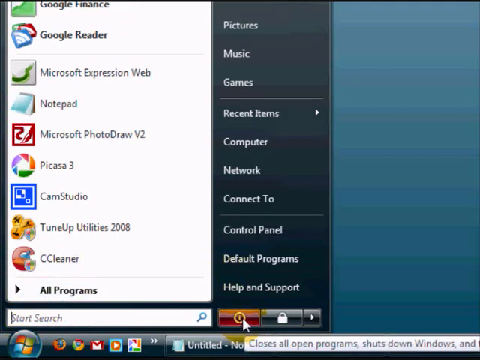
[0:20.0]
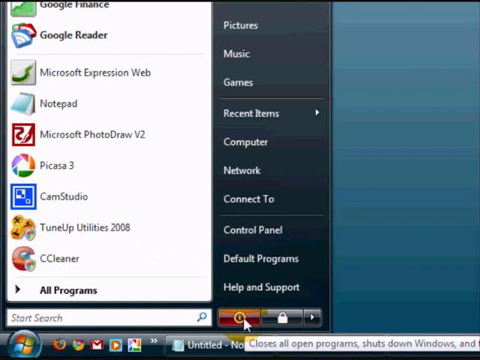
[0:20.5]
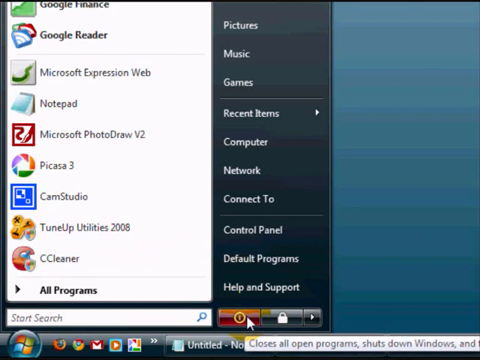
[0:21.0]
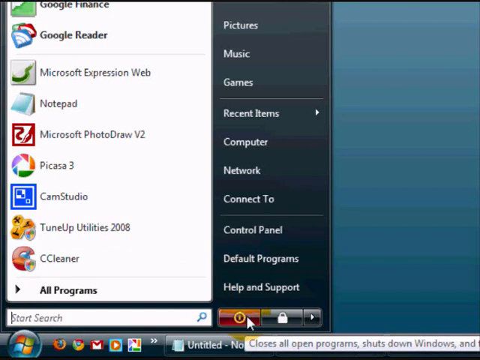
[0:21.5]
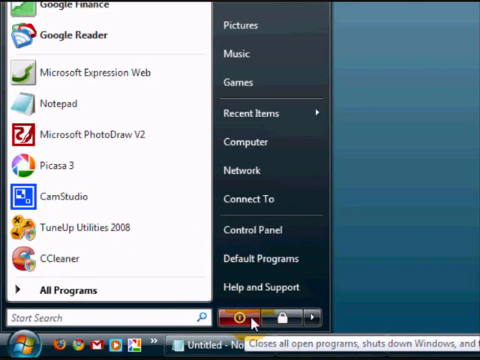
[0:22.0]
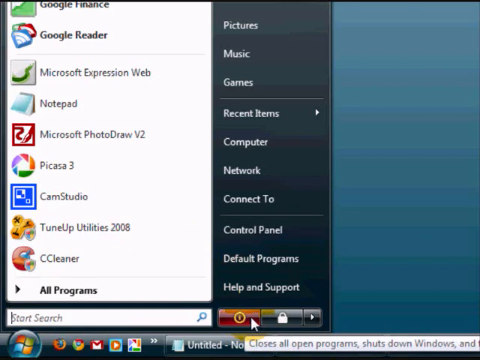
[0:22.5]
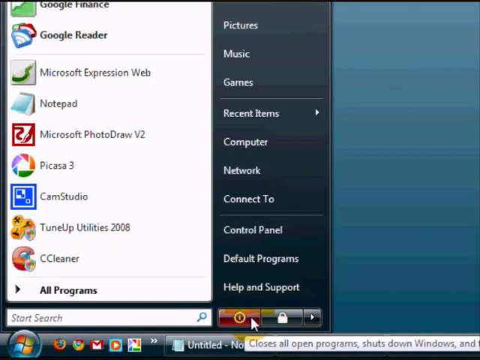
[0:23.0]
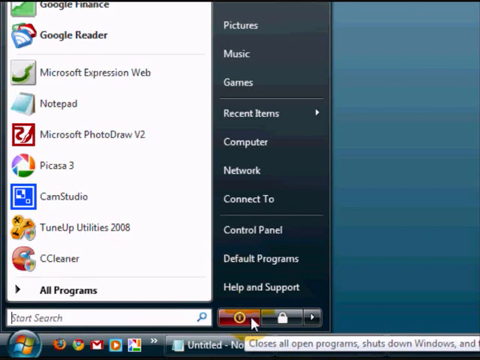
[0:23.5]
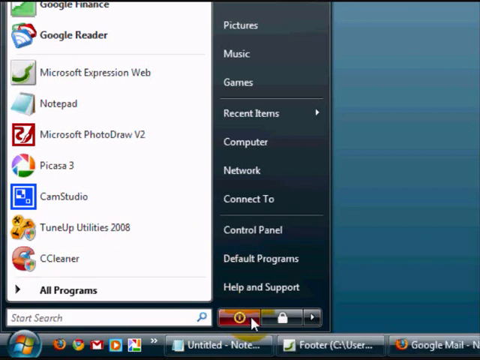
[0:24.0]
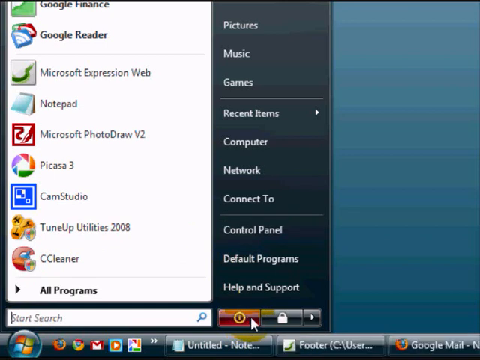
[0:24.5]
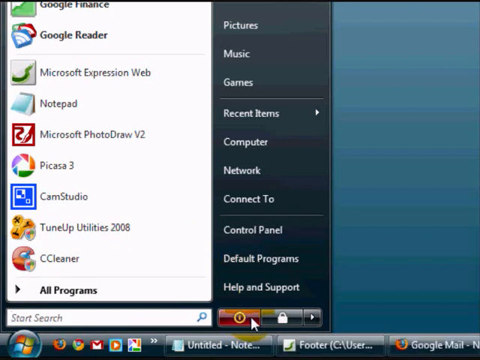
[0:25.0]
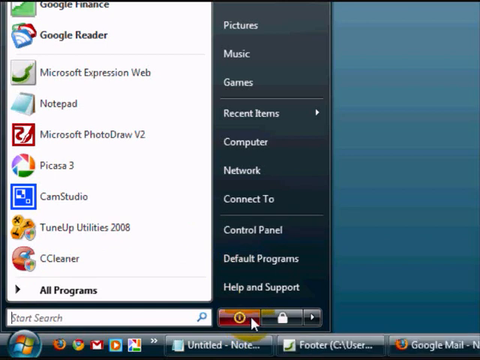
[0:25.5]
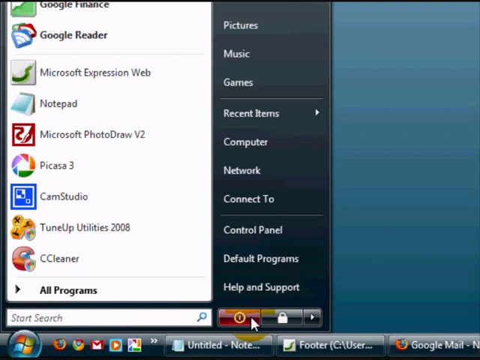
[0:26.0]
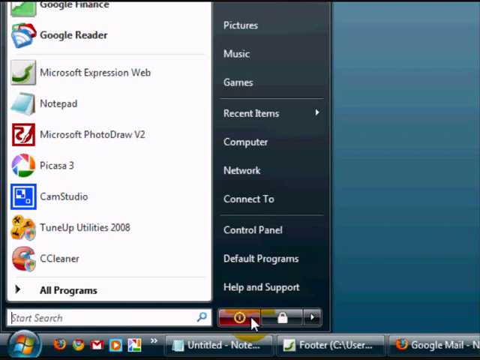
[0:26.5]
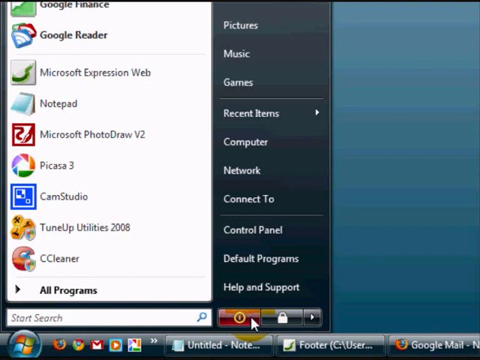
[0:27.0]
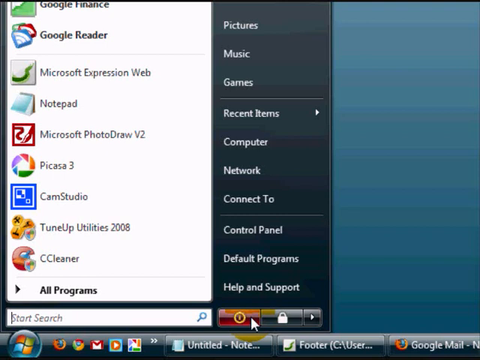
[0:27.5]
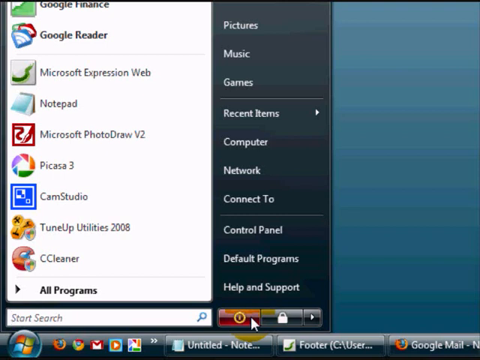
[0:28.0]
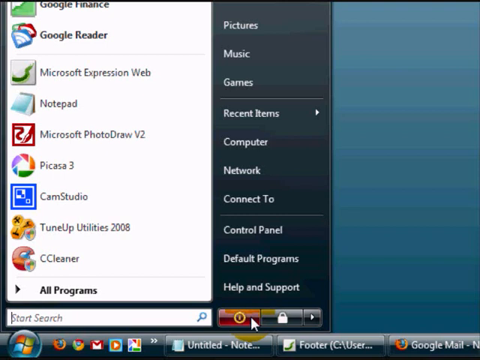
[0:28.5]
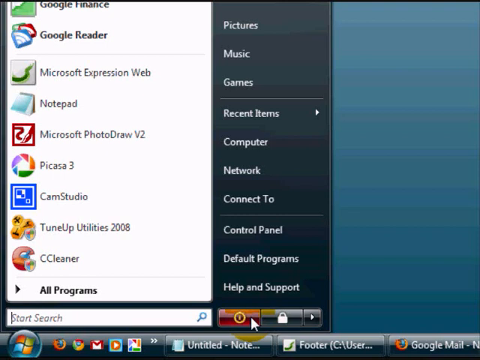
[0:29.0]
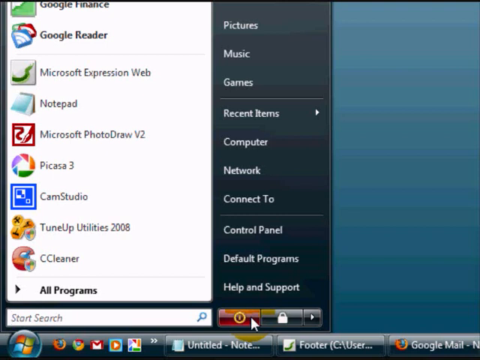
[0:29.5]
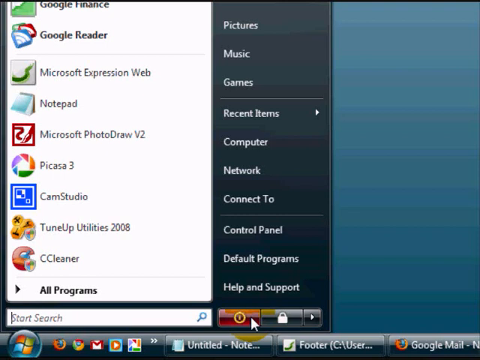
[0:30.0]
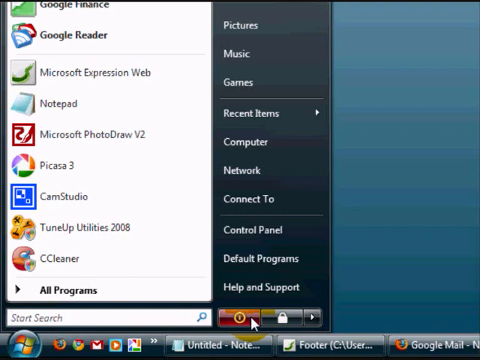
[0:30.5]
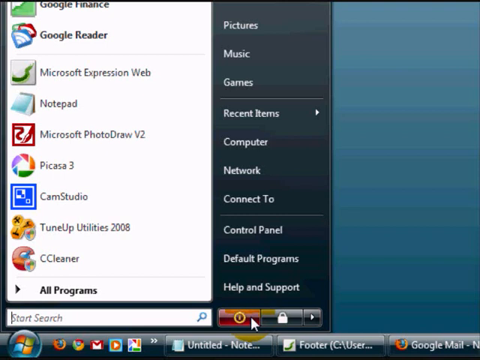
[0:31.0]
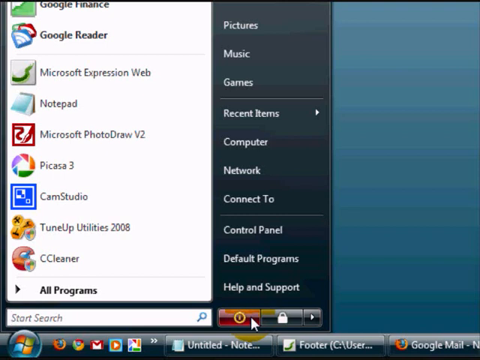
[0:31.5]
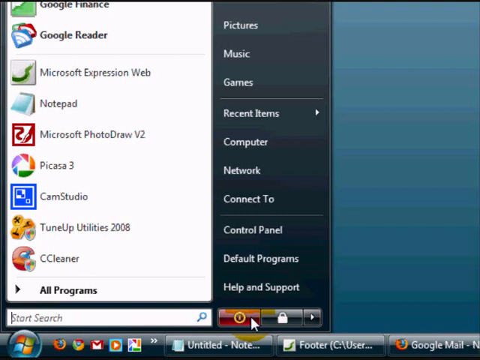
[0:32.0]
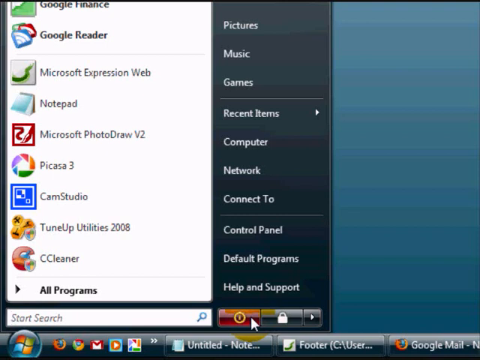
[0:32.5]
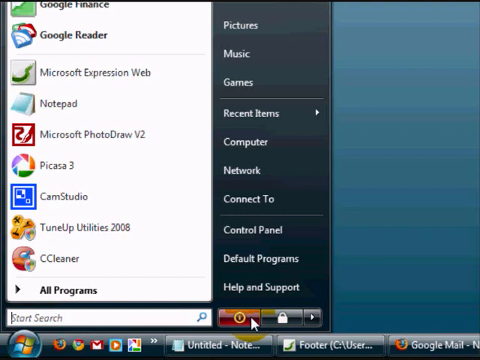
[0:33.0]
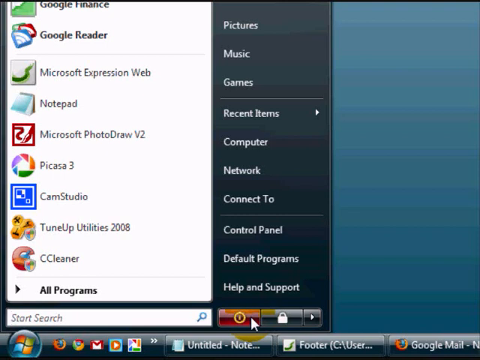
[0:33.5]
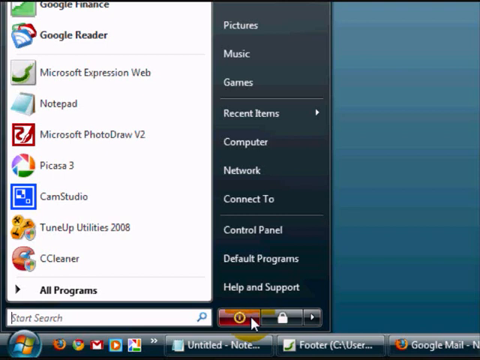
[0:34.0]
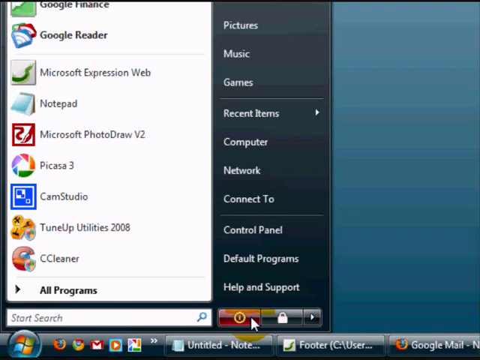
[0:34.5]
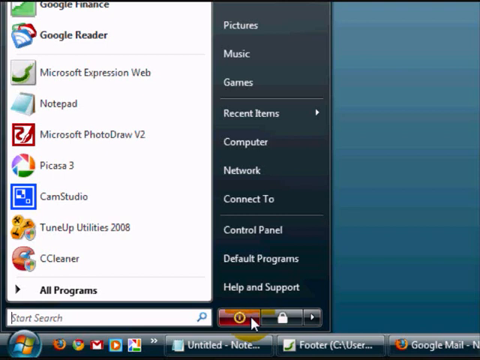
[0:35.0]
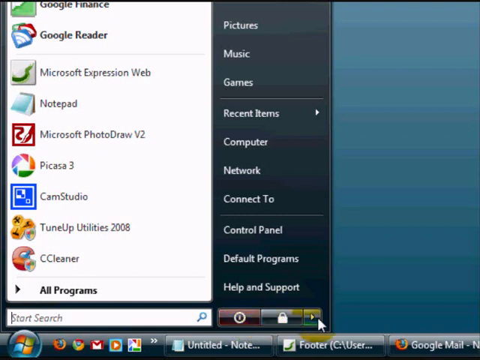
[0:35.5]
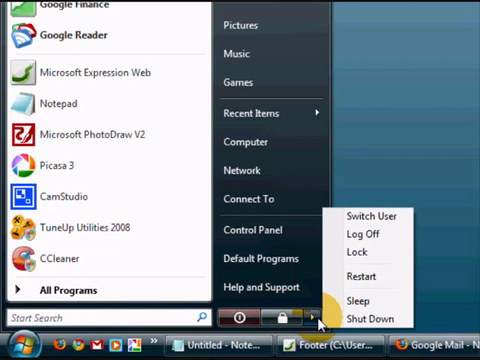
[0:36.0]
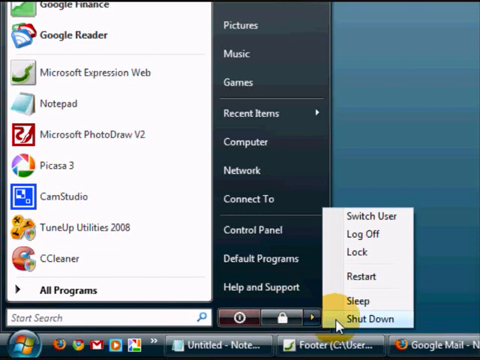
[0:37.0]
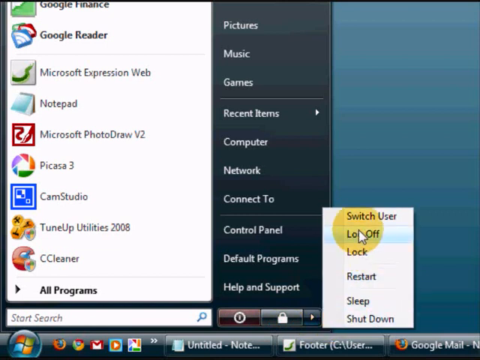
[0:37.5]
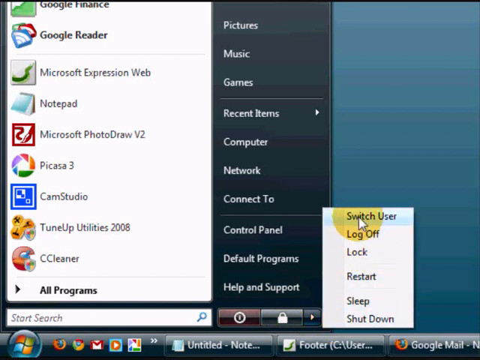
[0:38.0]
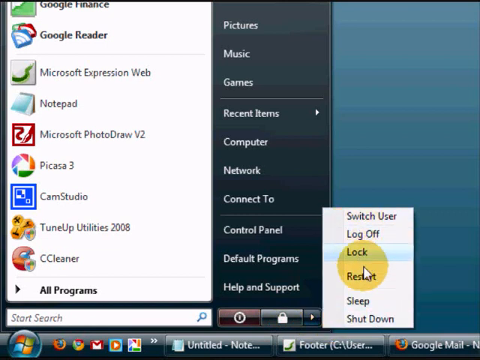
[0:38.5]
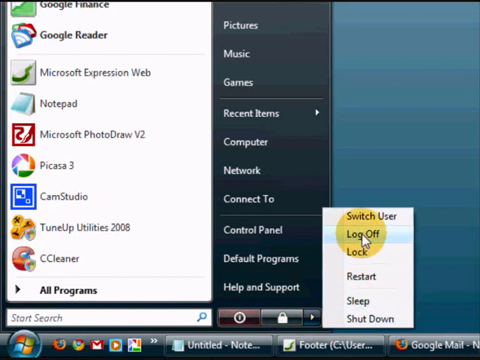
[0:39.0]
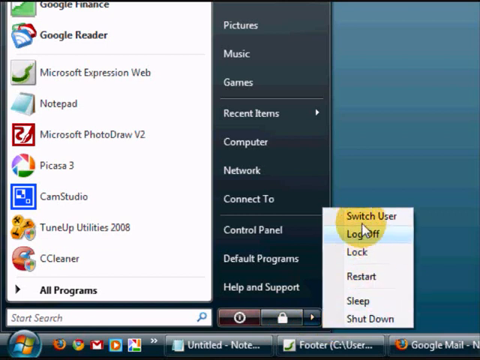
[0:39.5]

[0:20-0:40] A computer screen with a blue background shows an opened Start menu on the left side, covering most of the screen. Its list reads, from the top: "Google Finance," "Google Reader," "Microsoft Expression Web," "Notepad," "Microsoft PhotoDraw V2," "Picasa 3," "Cam Studio," "TuneUp Utilities 2008," "CCleaner," and "All Programs," with a search bar. To the right, on black, a list reads "Pictures," "Music," "Games," "Recent Items," "Computer," "Network," "Connect To," "Control Panel," "Default Programs," and "Help and Support." Below these is a red off button with a white padlock, and to the right of the padlock is an arrow pointing right. The mouse pointer sits over the off button, then moves right onto the arrow. A dropdown menu appears reading, from the top, "switch users," "log off," "lock," "restart," "sleep," and "shut down." The pointer goes to "switch users," then to "log off," and back up to "switch users."